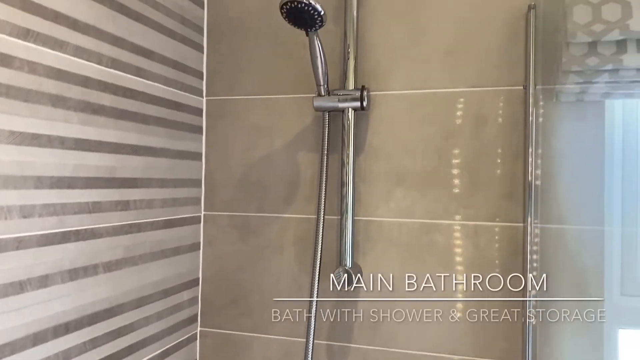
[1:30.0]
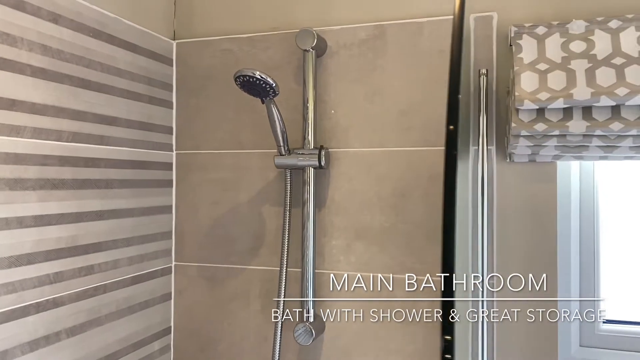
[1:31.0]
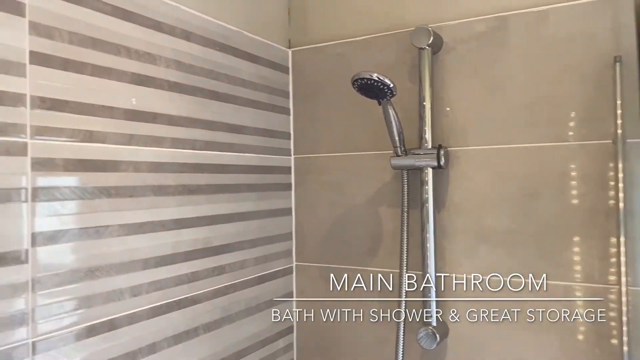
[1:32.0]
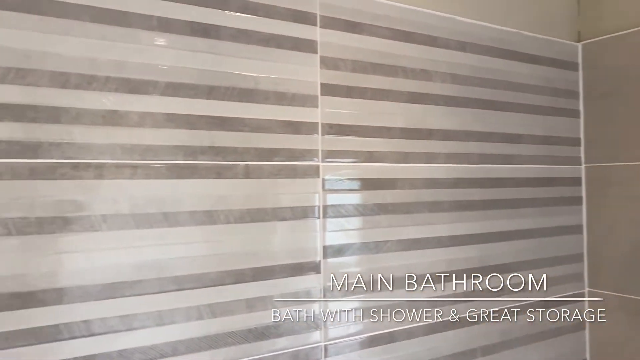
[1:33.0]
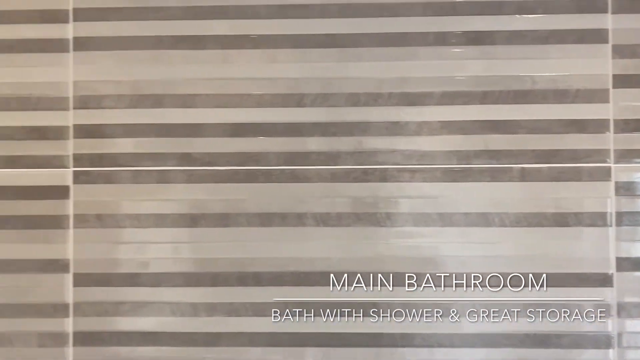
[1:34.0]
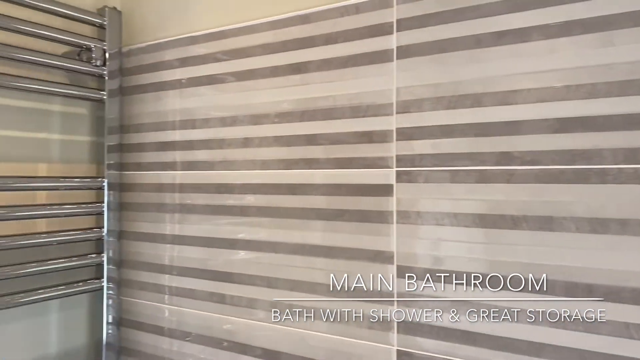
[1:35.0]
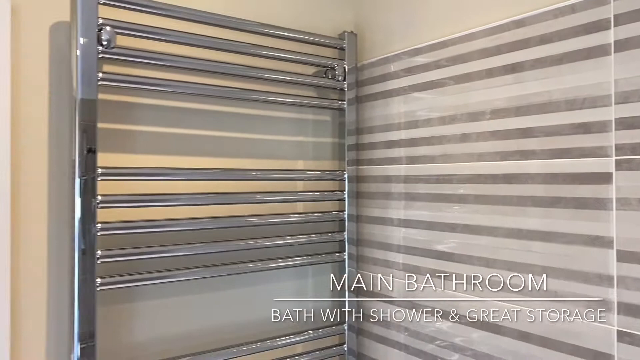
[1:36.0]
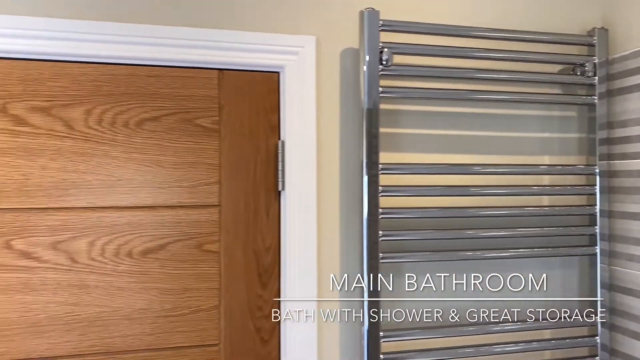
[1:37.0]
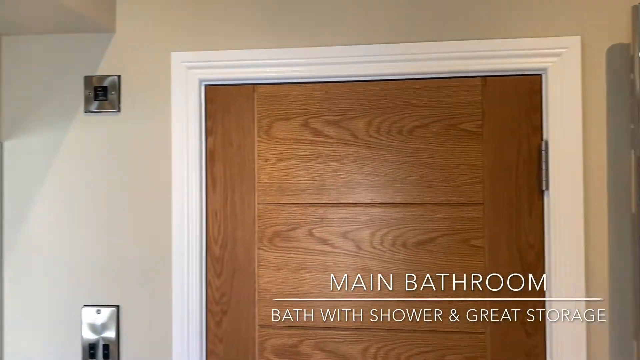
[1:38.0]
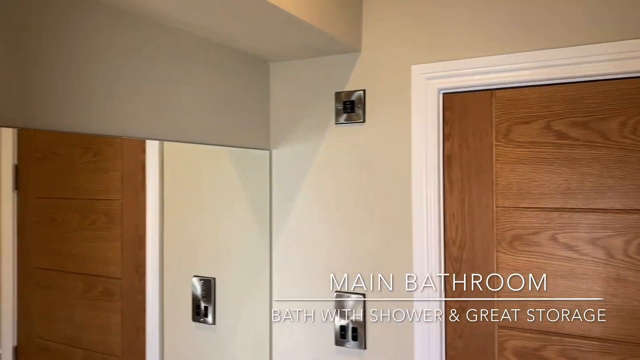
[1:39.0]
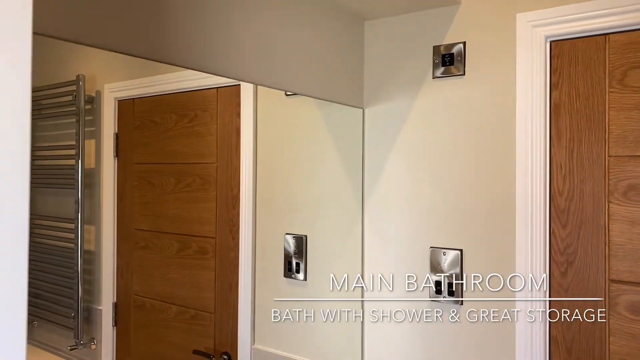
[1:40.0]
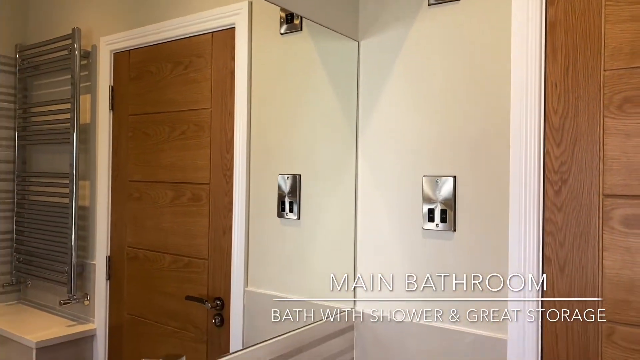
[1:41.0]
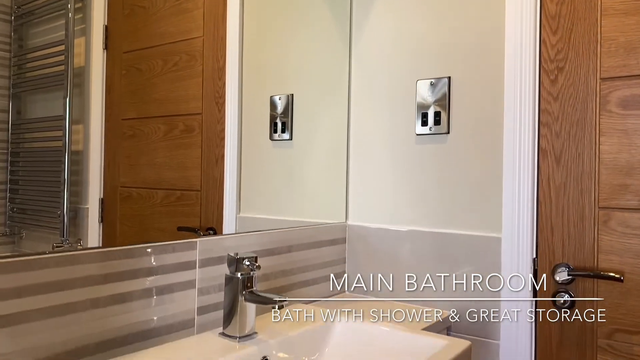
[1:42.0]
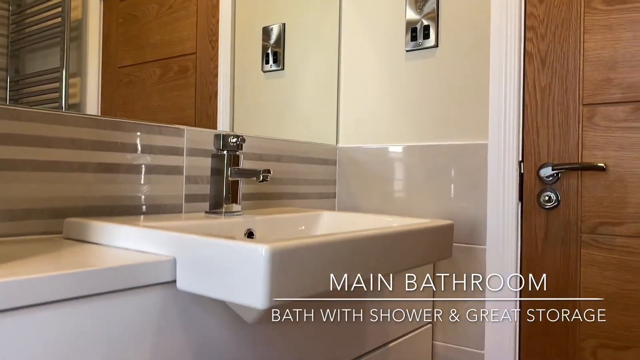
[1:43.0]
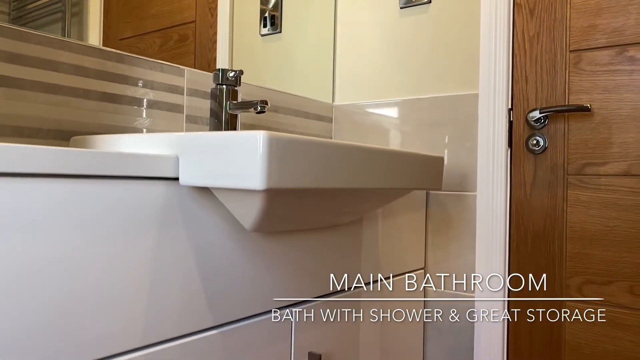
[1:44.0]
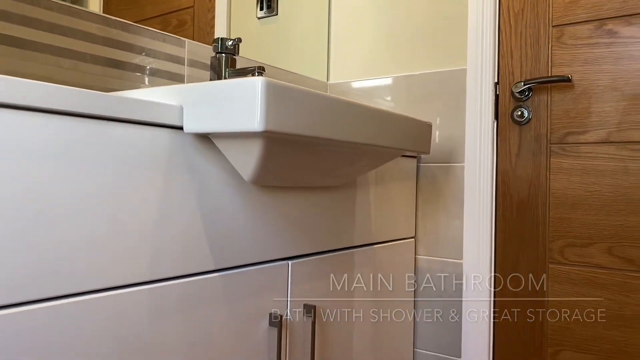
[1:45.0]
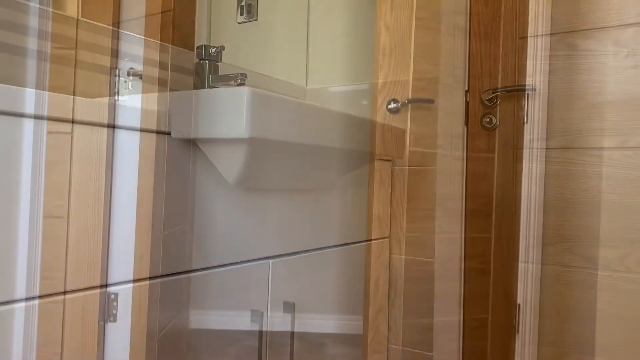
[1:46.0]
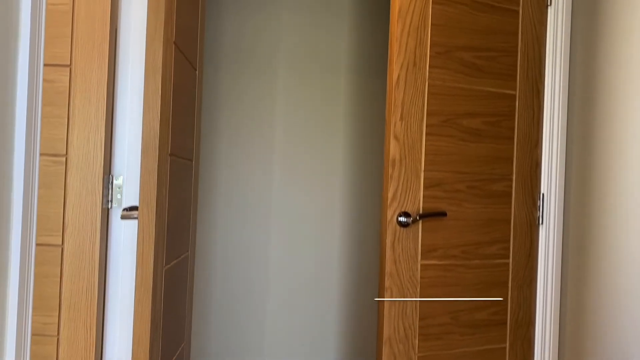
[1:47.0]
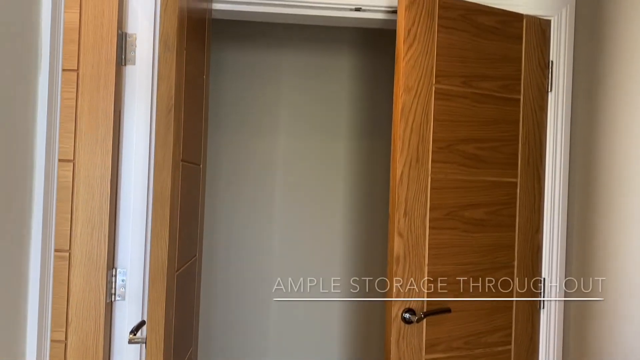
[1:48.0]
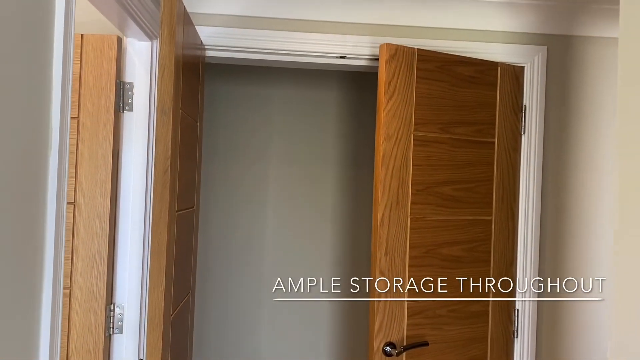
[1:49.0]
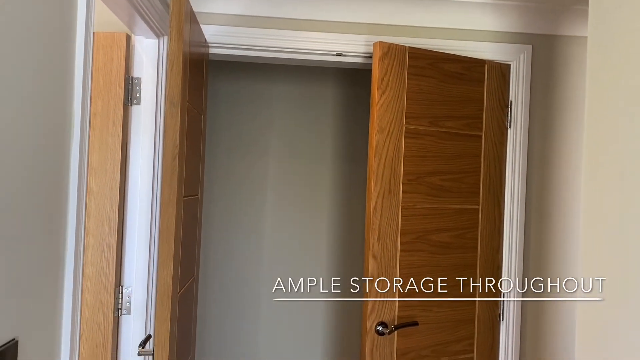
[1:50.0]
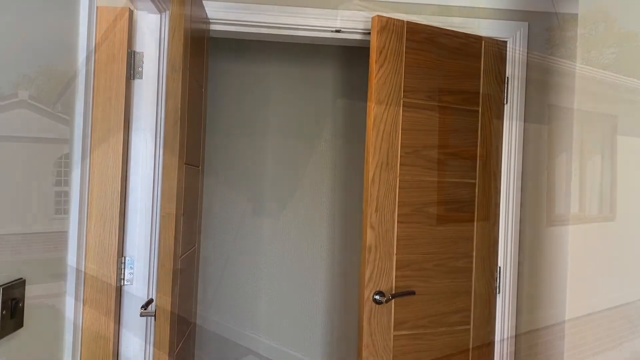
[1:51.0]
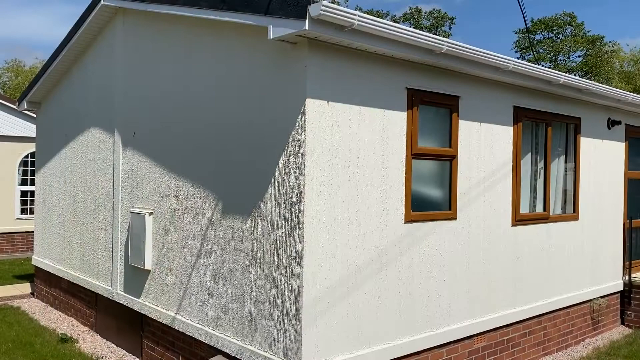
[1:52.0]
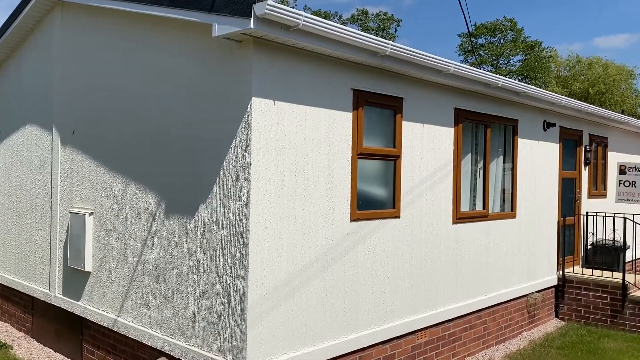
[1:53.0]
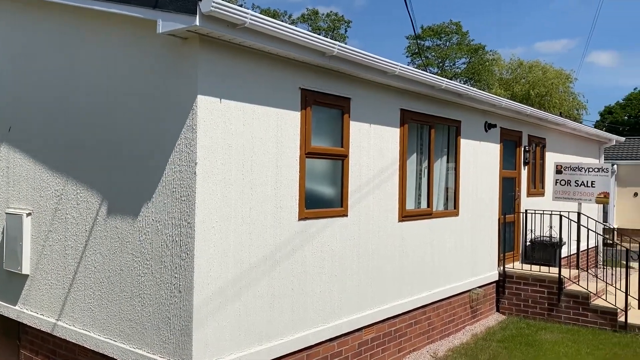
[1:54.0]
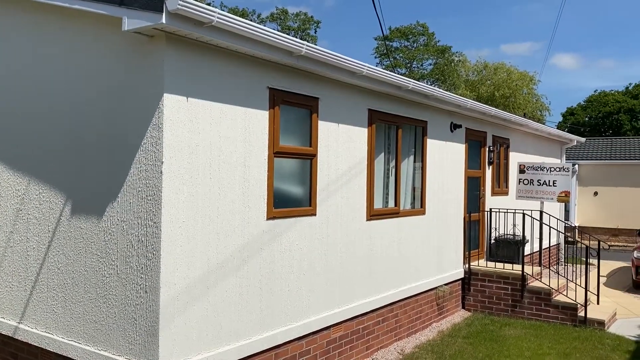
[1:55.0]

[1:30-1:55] Inside the shower, captions appear reading "main bathroom," then a dividing line, then "bath with shower & great storage." The camera pans around, looking sort of at the top of the shower and the rest of the bathroom, then turns to a closed wooden door. To the left of the door are the faucet and sink. The sink is a sort of marble, white square design, and the faucet is sort of a vertical rectangle with the faucet head coming out in the center. Panning down a bit shows two handles for the cabinets below. The view then looks inside a storage drawer for clothes, with a caption reading "ample storage throughout." Next, the outside of the fancy trailer-home-style building is shown. The short side on the left has a square vent at the bottom, and on the right side is the doorway with windows and a staircase leading up to it. A sign beside the door reads "for sale," with "Berkeley Parks" above it; text between that and "for sale" and text below are too blurry to read.